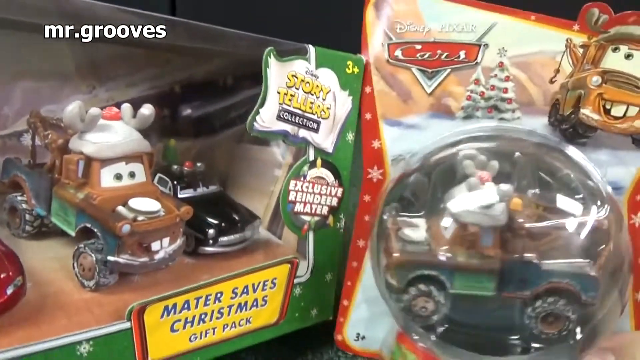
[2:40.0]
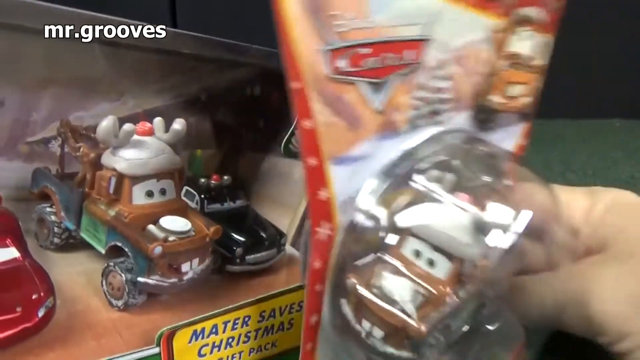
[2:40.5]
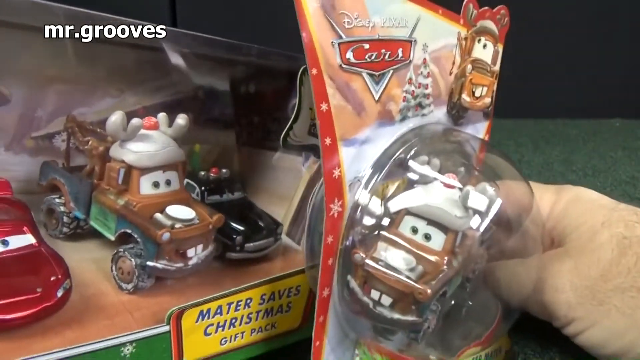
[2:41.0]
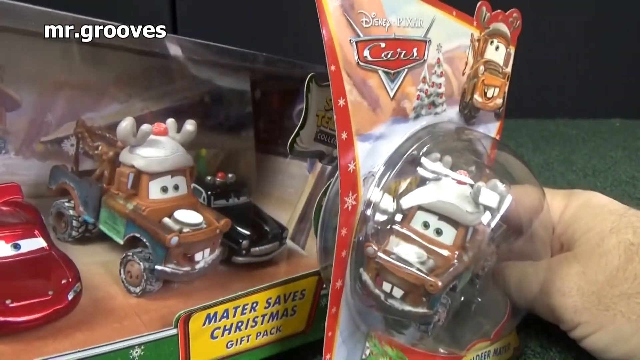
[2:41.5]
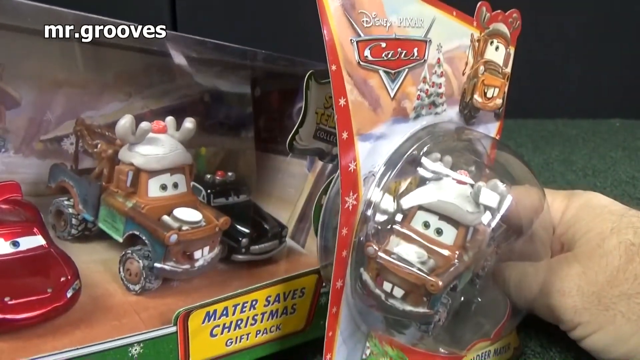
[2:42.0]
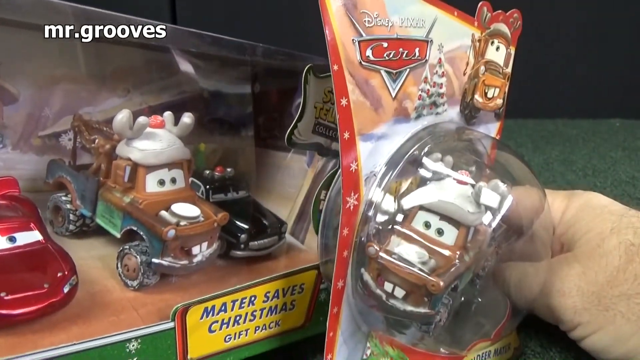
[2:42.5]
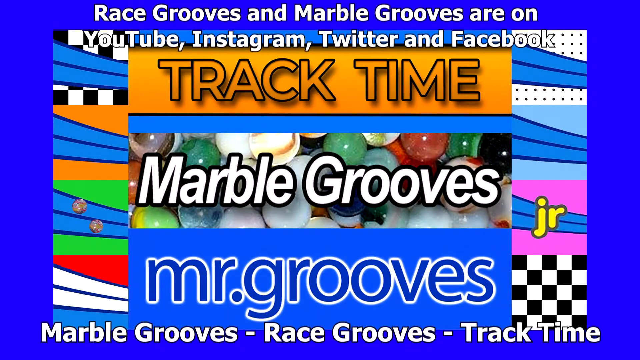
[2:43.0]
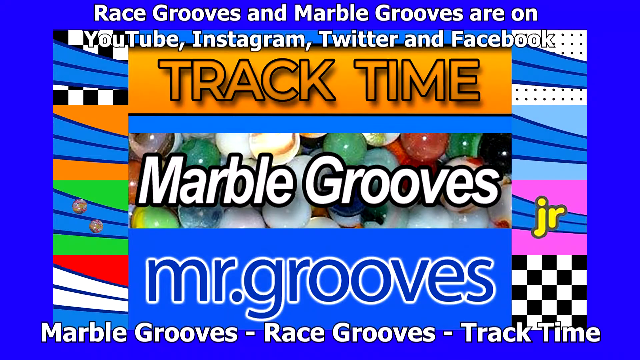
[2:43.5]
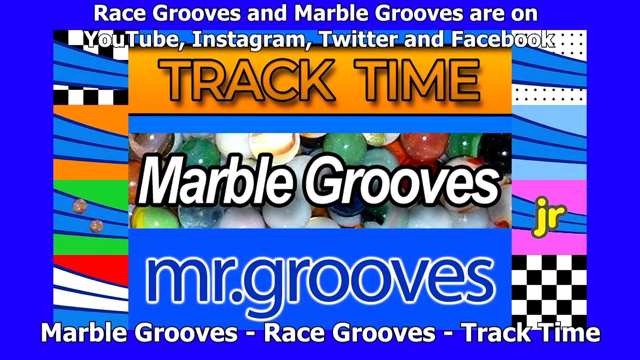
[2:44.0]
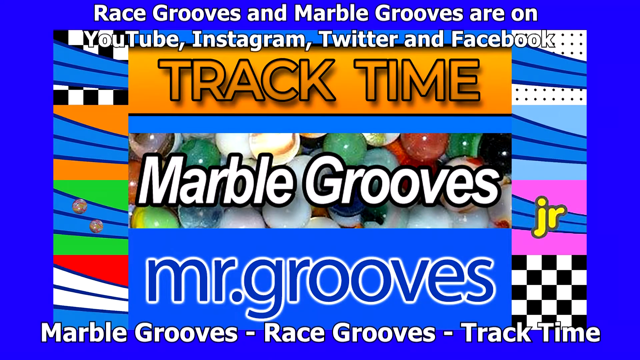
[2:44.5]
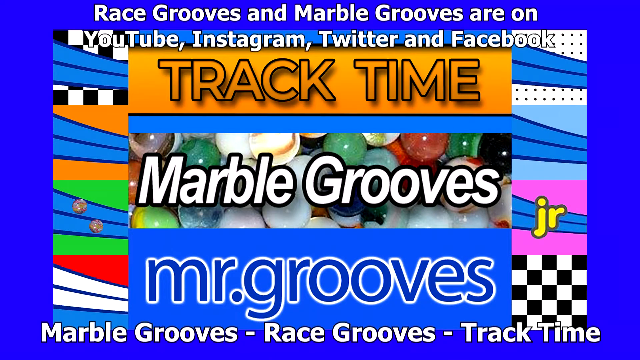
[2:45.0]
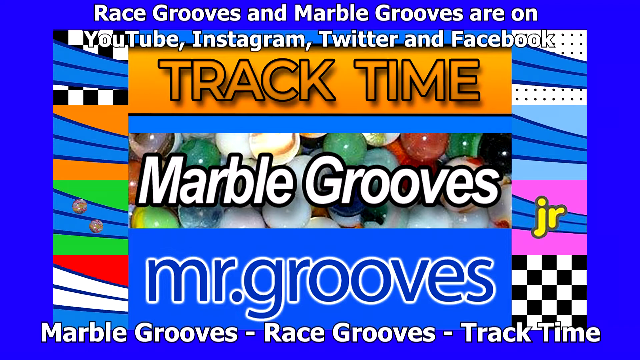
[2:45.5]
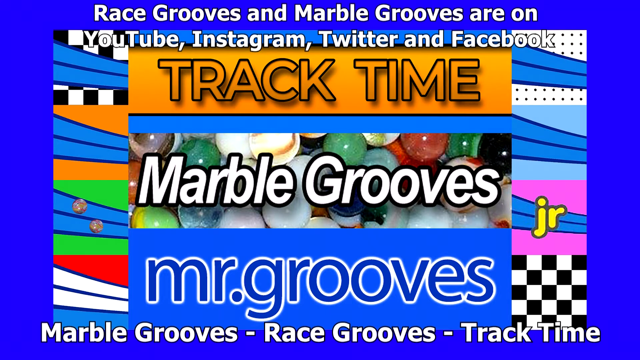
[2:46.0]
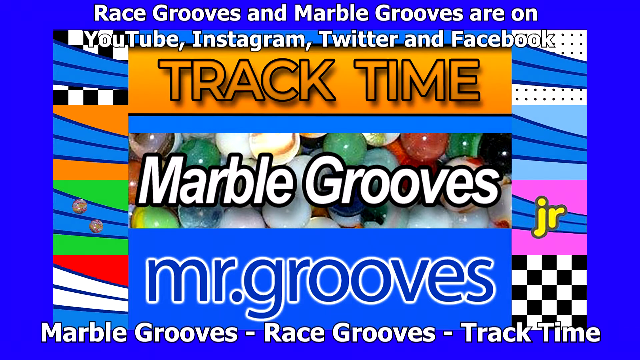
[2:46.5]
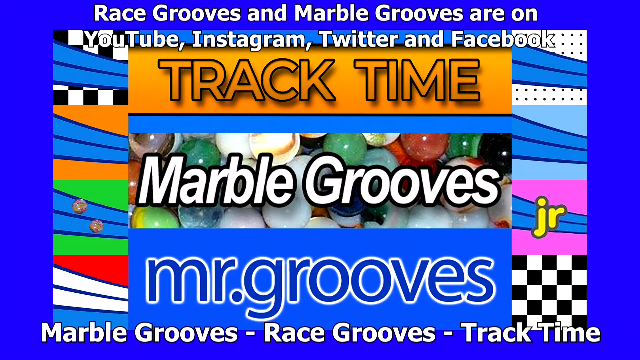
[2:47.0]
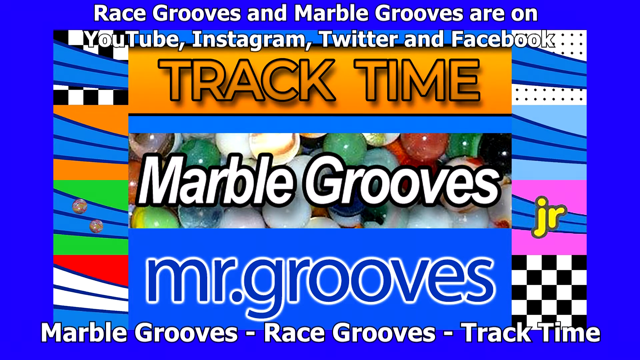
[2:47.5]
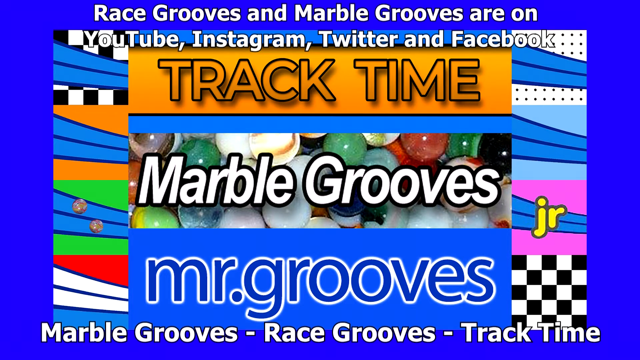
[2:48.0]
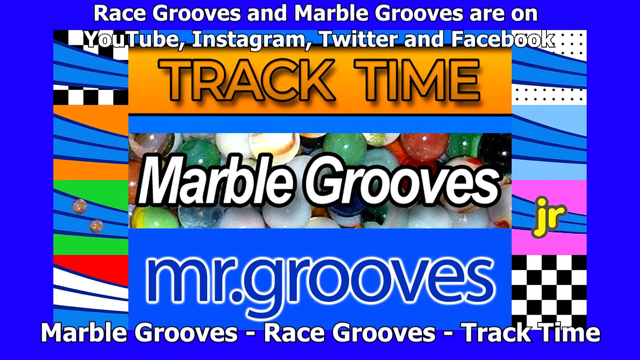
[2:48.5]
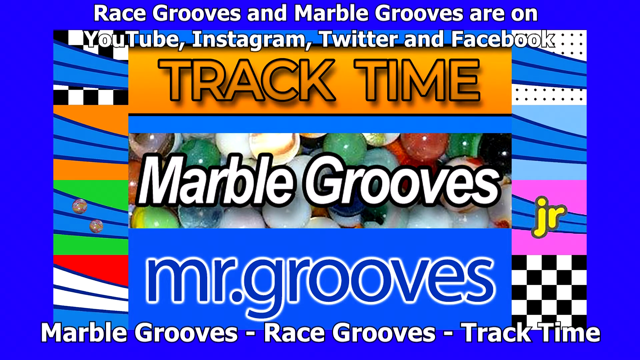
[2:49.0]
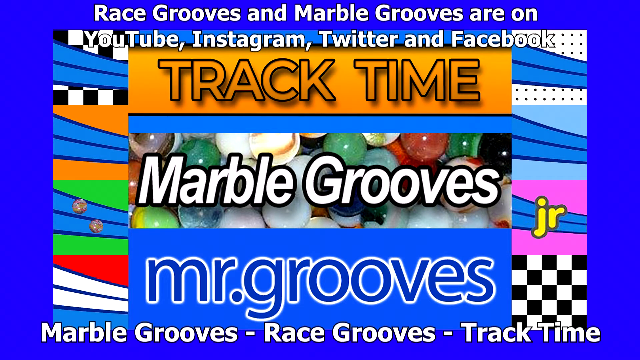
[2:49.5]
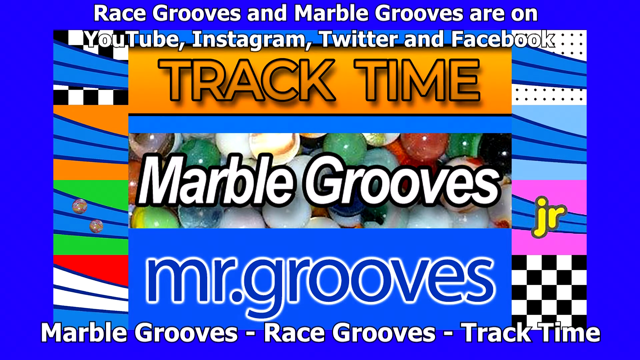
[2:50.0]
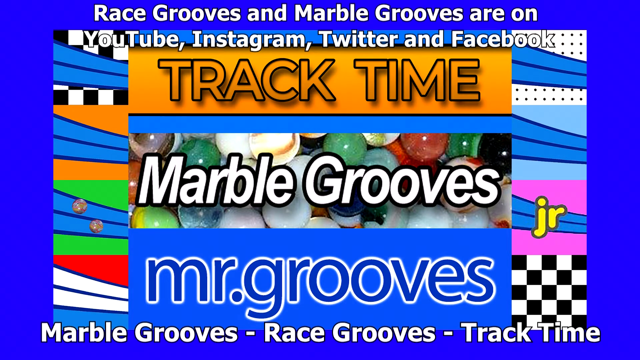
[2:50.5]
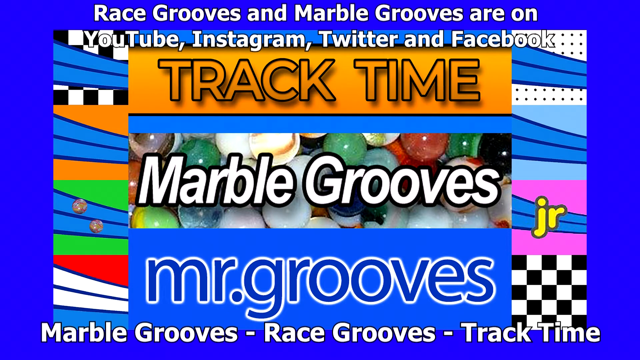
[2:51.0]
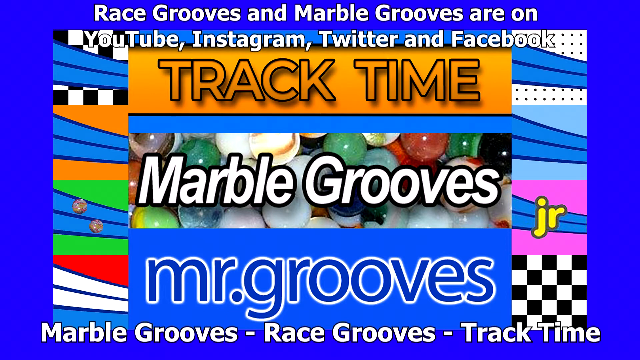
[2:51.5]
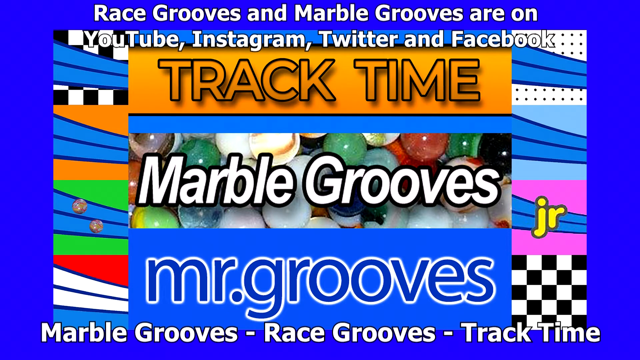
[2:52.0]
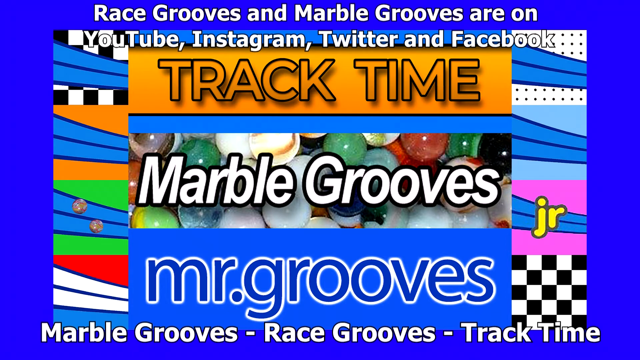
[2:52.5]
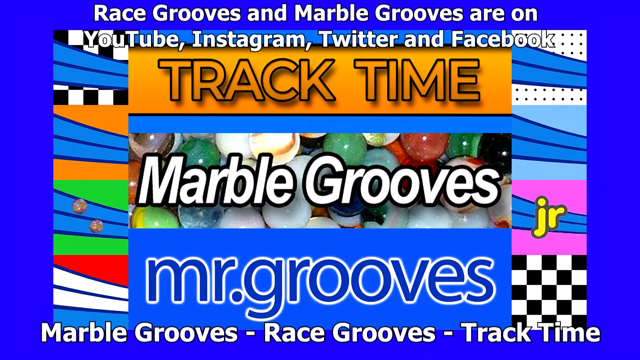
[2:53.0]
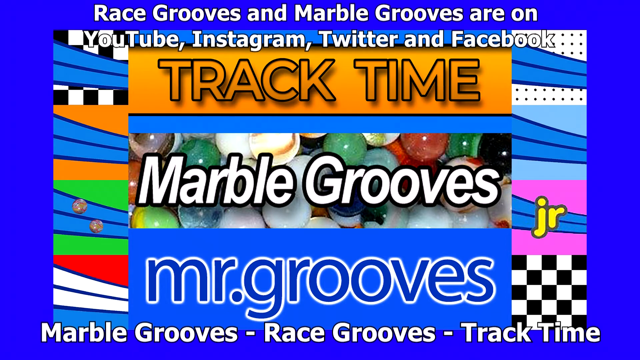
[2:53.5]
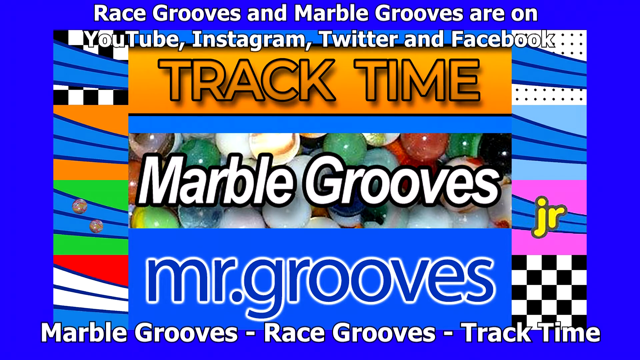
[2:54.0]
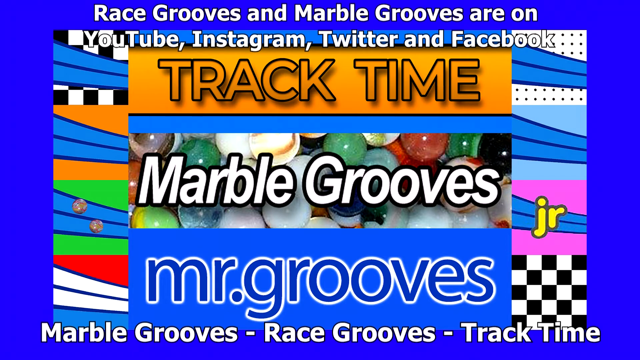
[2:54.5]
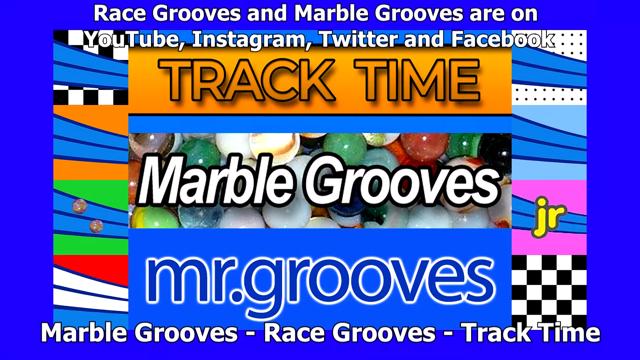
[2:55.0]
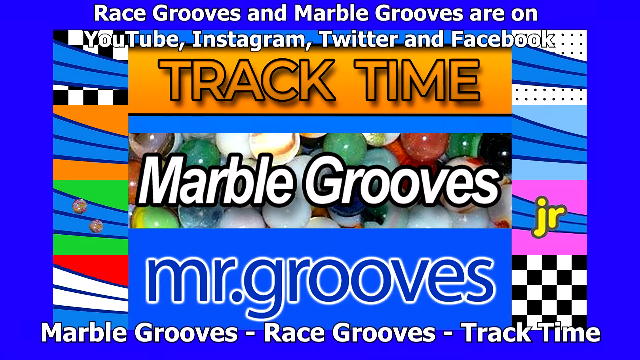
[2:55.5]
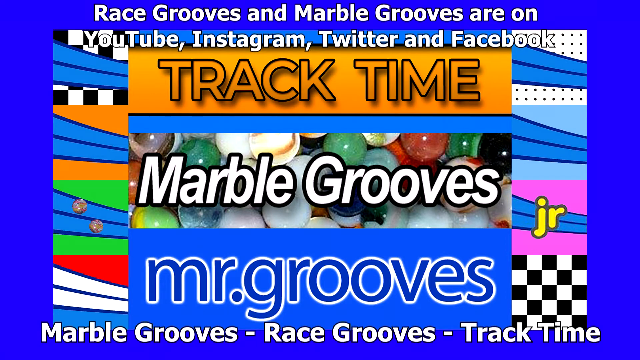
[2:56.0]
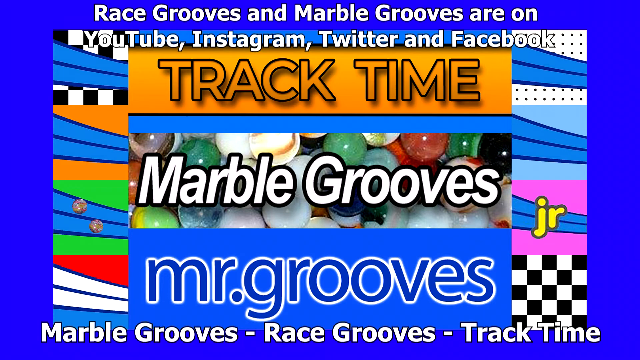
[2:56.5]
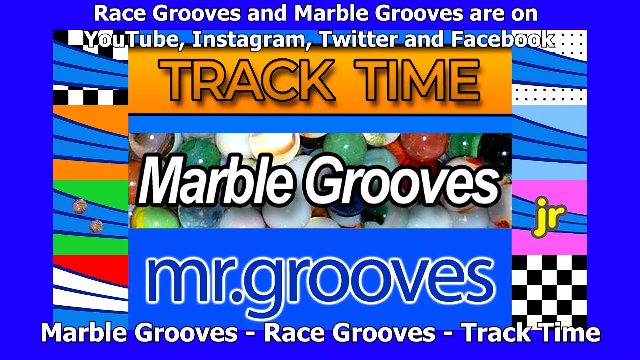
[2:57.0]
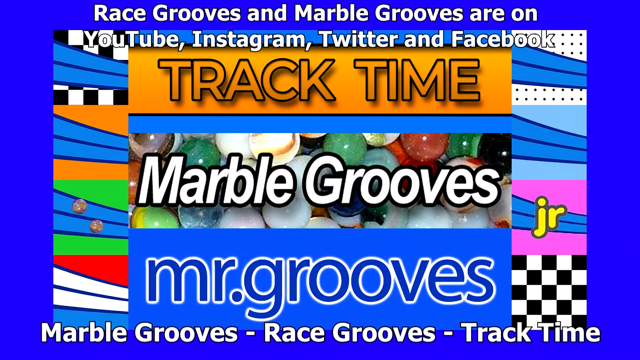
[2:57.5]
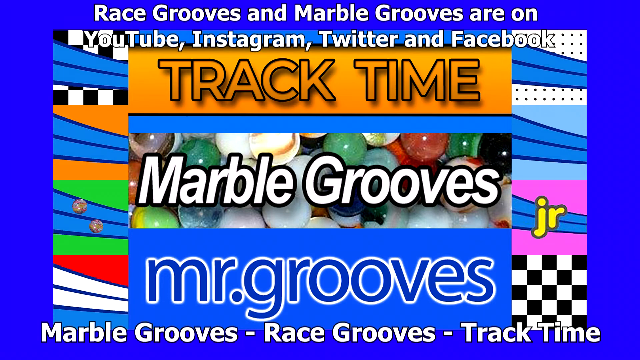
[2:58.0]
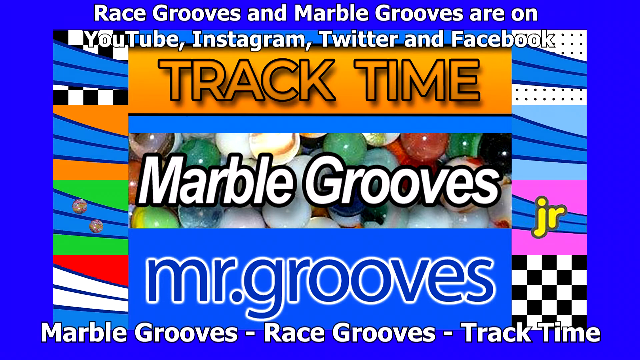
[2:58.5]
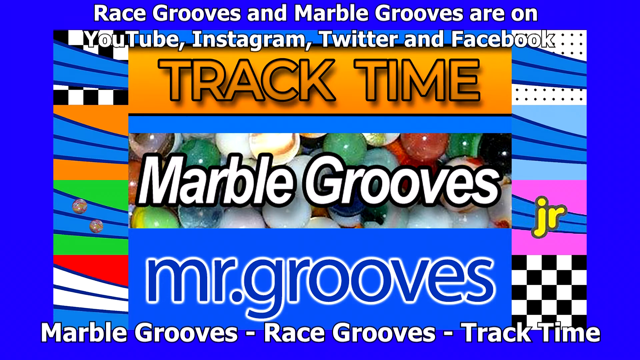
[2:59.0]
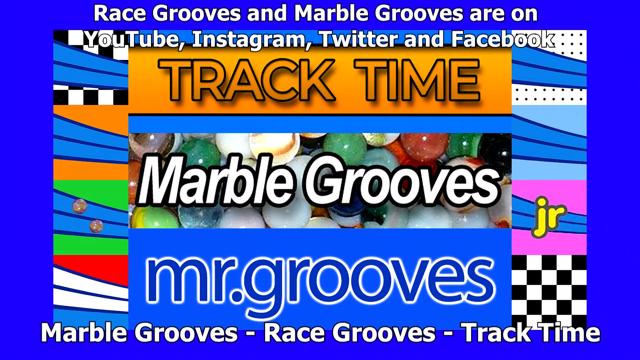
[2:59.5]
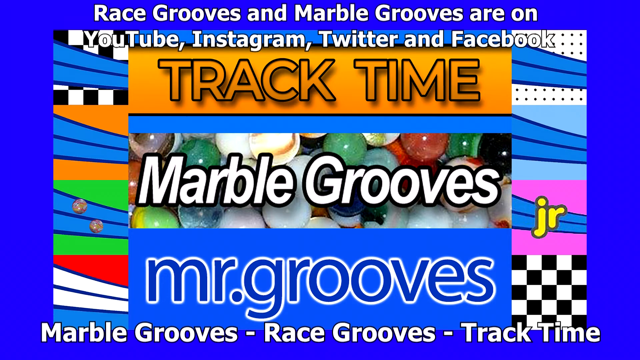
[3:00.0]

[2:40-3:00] A toy gift pack from the Disney movie Cars is shown. The pack is called "Meta Saves Christmas" and features a toy version of the old tow truck, dressed in a Santa hat. A hand holds up the package on the right side. The packaging on the right has the Cars logo along with an image of the same toy car that is in the package. The video ends with a screen showing "Race Grooves and Marble Grooves are on YouTube, Instagram, Twitter and Facebook," and "Track time" in an orange box with a black outline. The main picture is a blue box with different elements and "marble grooves" in white text. There are decorative elements like colored stripes and a pattern, and there is a picture of different colored marbles. The overall picture is colorful.